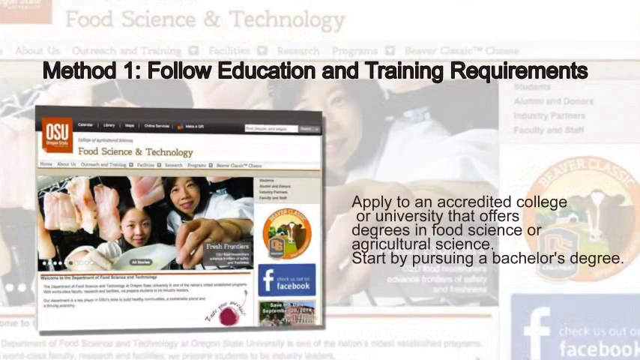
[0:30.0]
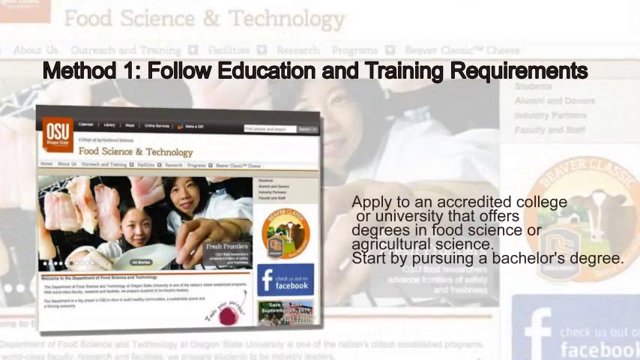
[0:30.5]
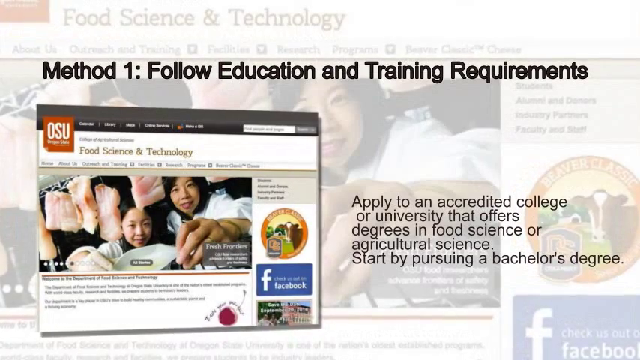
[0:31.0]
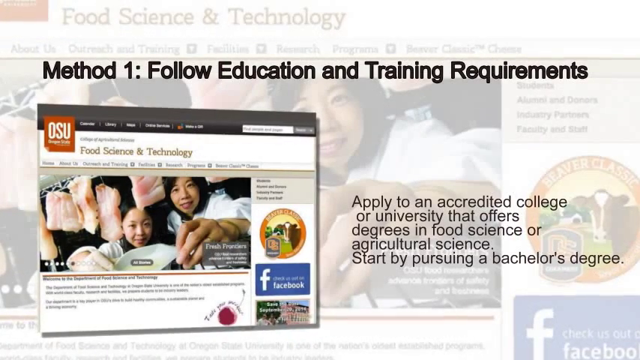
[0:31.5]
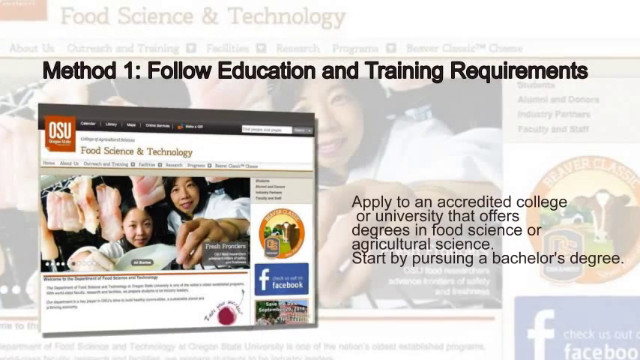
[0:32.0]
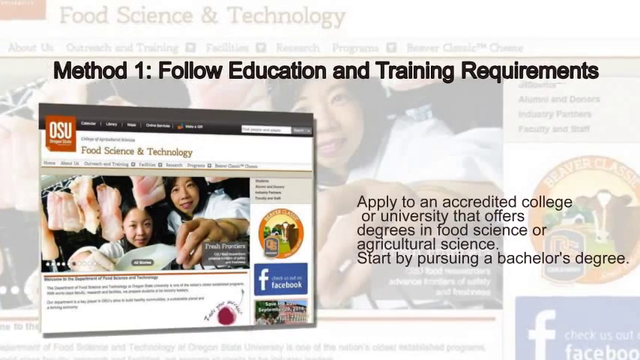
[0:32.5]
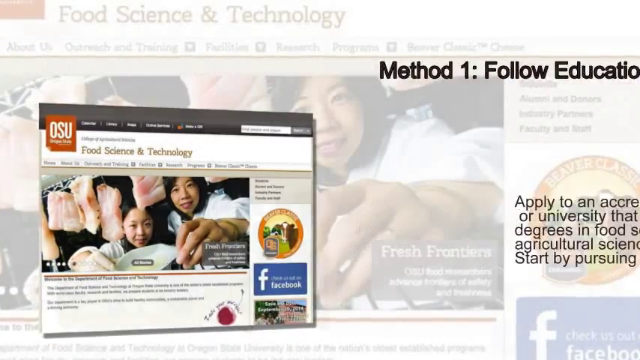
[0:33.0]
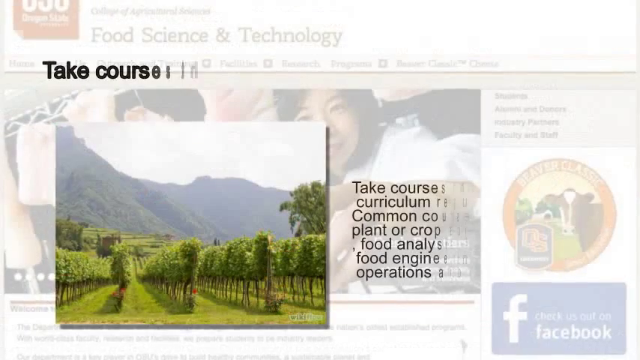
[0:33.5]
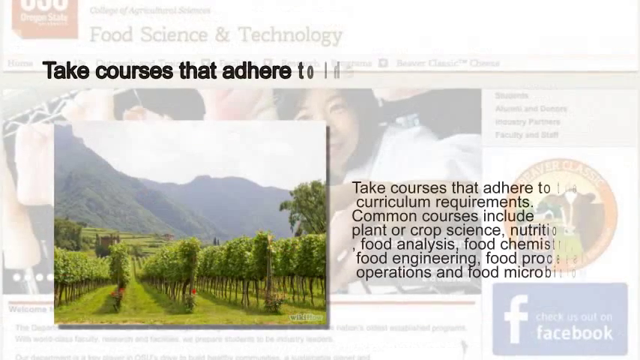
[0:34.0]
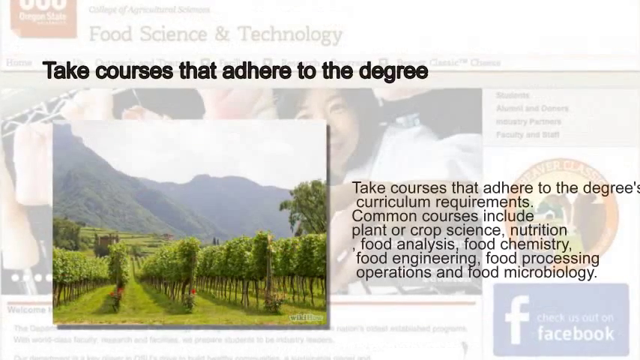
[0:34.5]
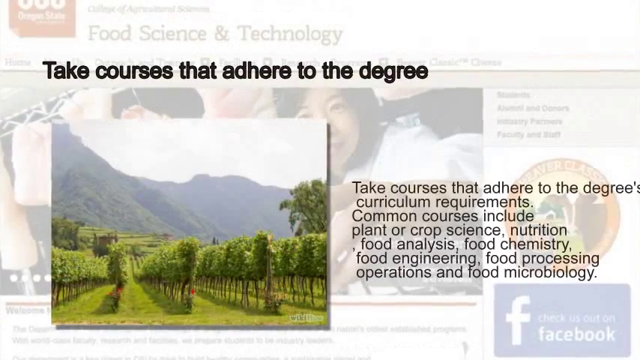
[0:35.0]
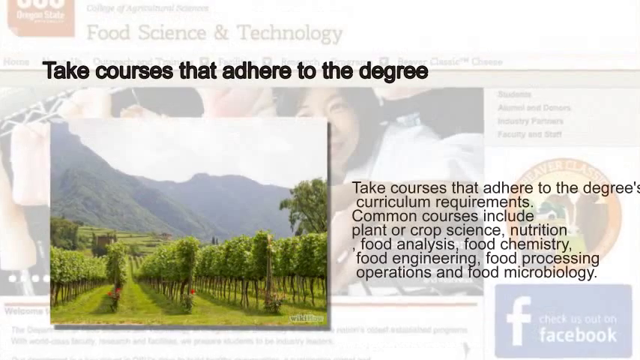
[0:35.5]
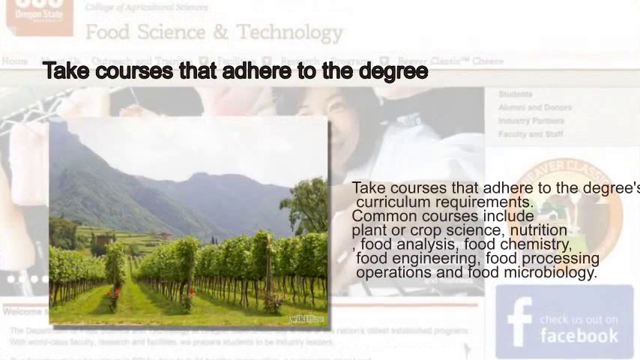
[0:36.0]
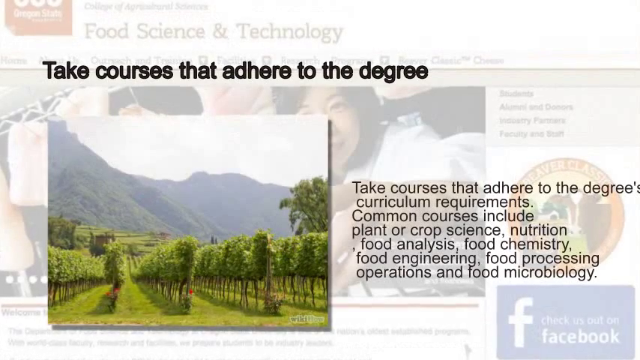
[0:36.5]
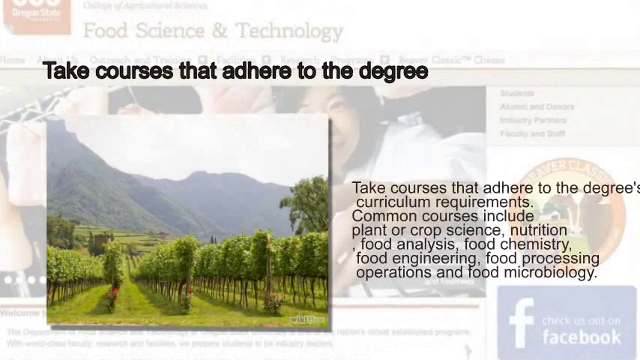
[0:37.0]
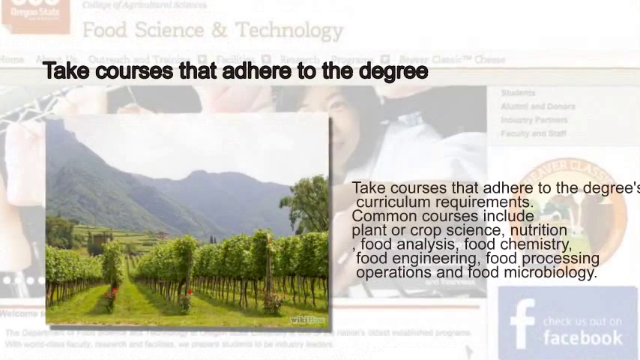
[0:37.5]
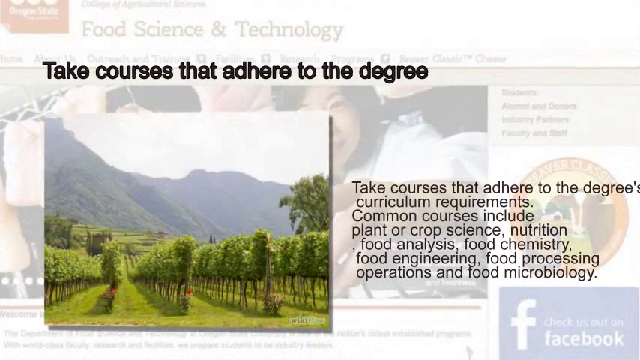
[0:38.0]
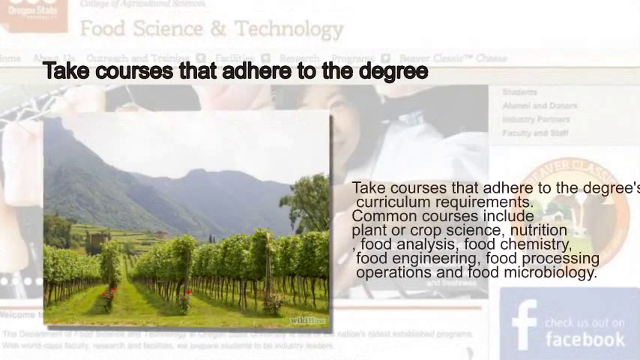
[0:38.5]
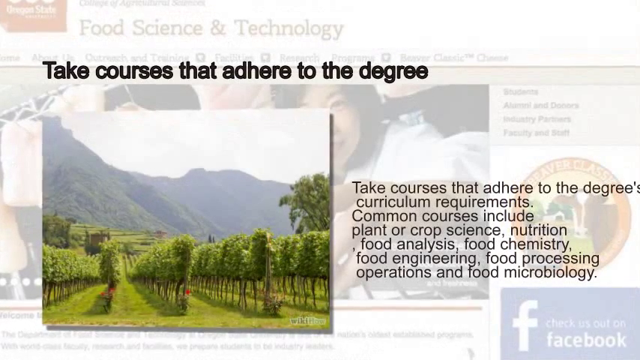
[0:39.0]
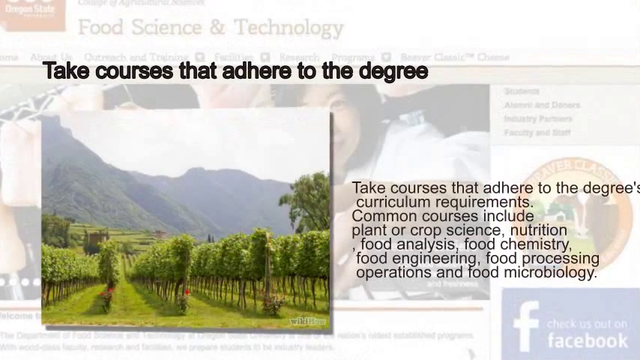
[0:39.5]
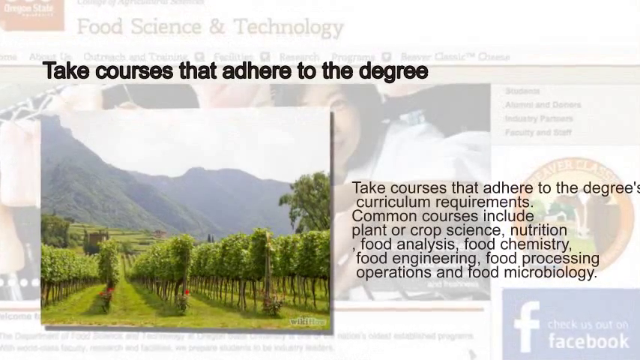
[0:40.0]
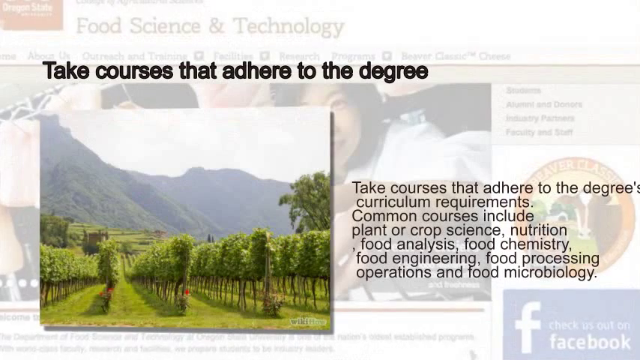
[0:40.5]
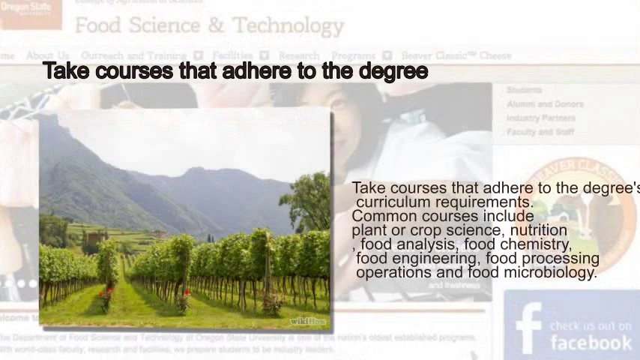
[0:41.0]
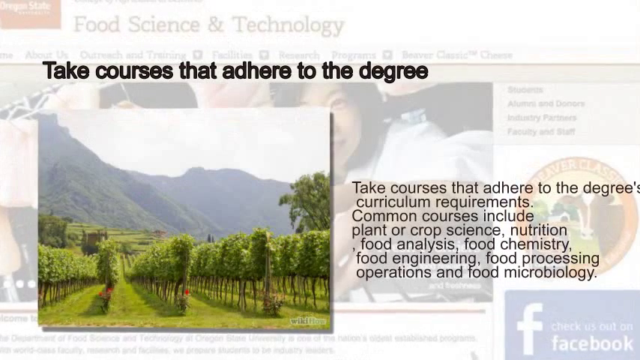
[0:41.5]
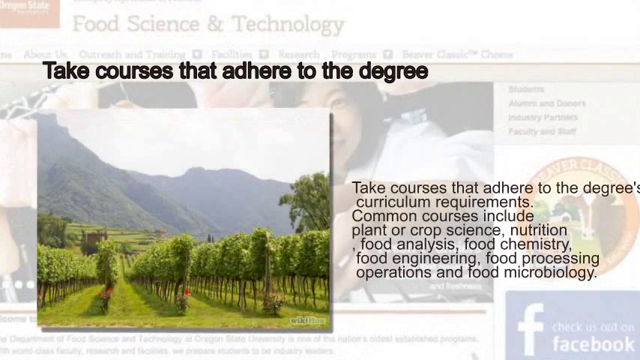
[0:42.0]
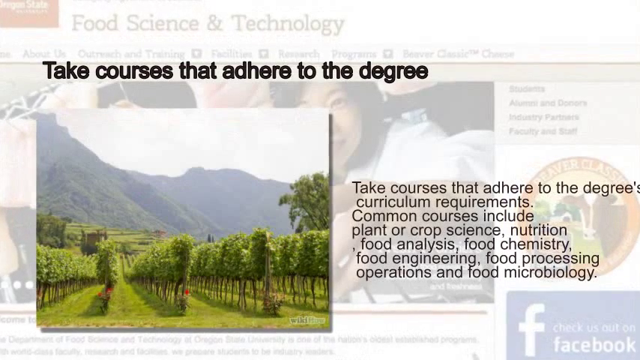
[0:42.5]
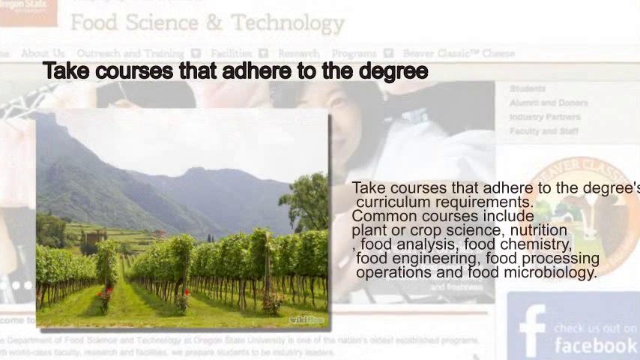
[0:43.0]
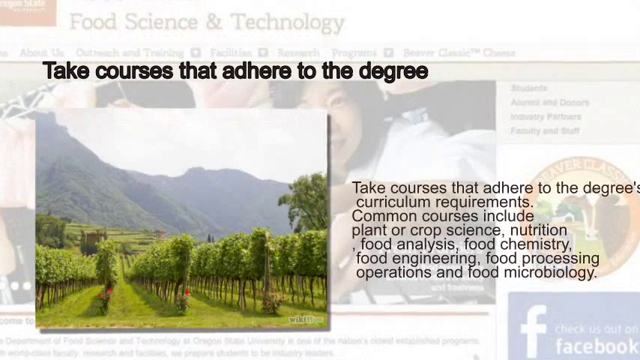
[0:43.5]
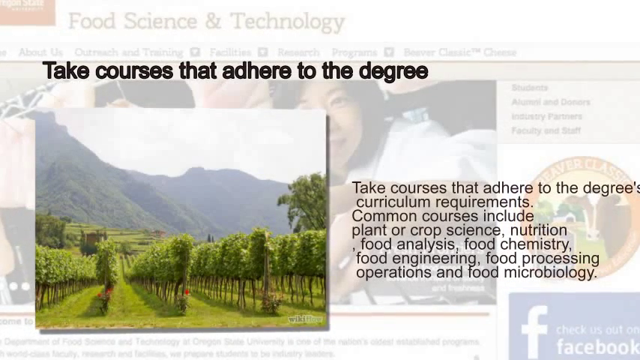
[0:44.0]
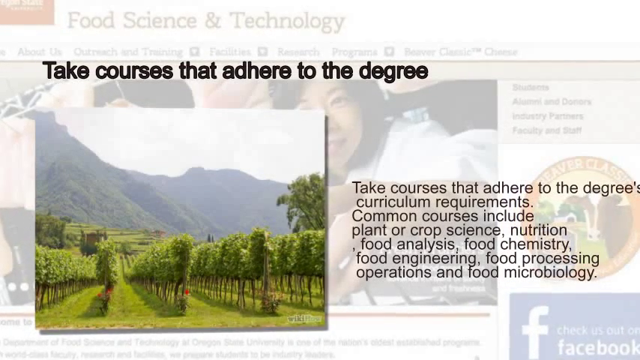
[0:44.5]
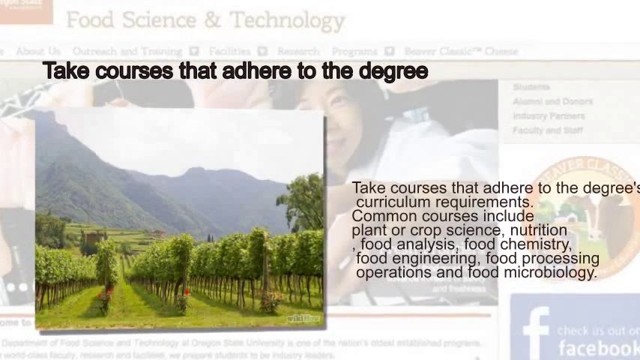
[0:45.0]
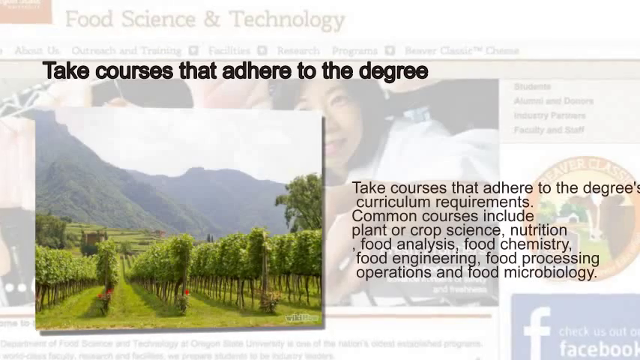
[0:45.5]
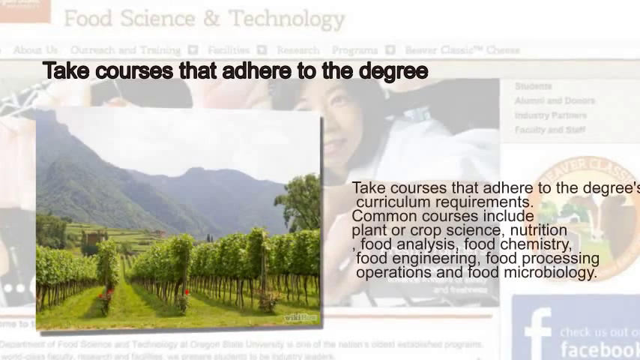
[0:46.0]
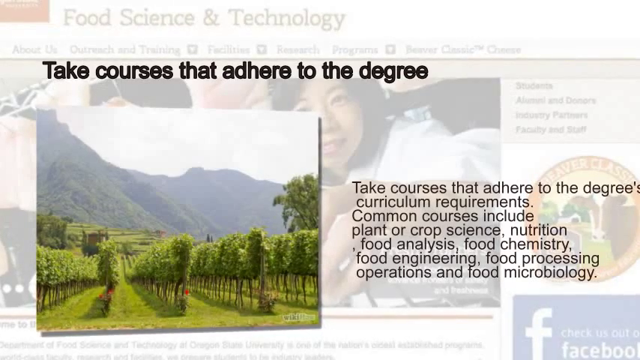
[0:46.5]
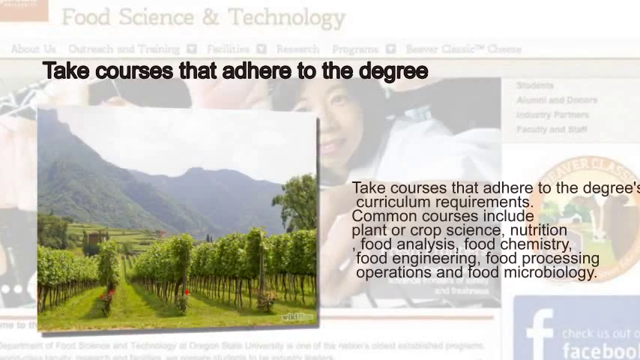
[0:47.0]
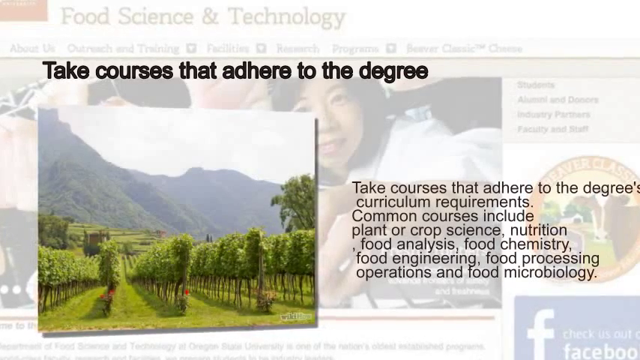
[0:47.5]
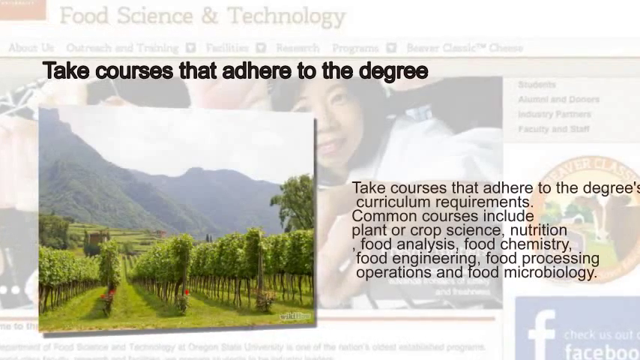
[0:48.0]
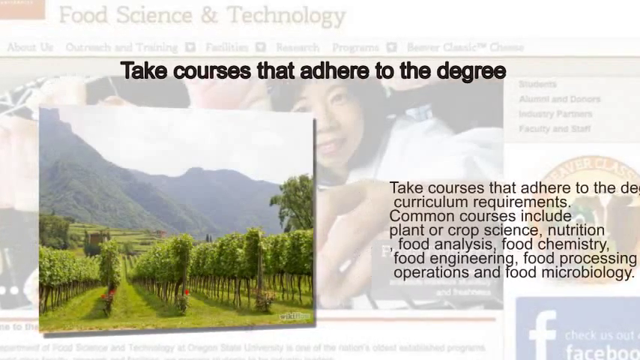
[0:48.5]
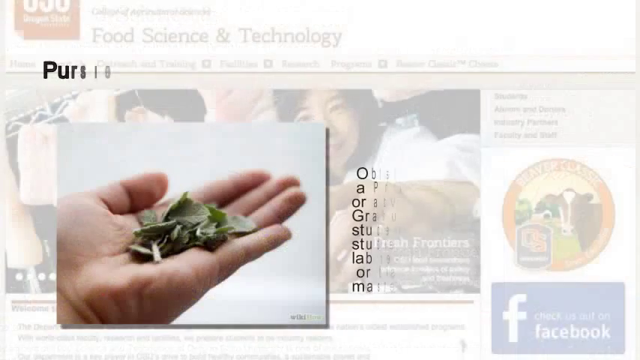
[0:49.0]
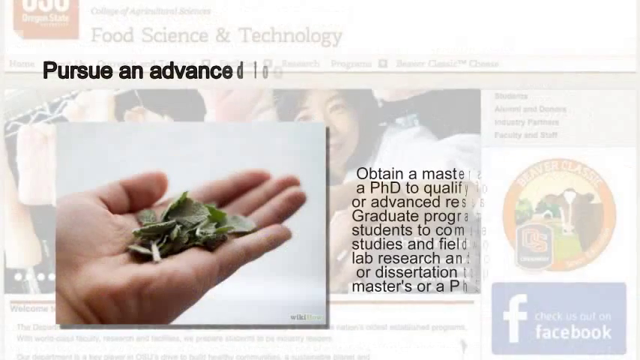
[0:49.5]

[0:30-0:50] The subject is still how to become a food scientist. Text reads "method one, follow educational training requirements" and "apply to an accredited college or university that offers a degree in food science or agricultural science start by pursuing a bachelor's degree." The article is titled "food science and technology" and shows two people, a guy and a girl, touching food that looks like a fish. The next picture comes up with the text "take courses that adhere to the degree's curriculum requirements. Common courses include plant or crop science, nutrition, food analysis, food chemistry, food engineering, food processing, operations and food microbiology." On the left is the picture seen earlier at the bottom, of the hilly mountains and the systematically planted trees. Then the hand picture appears.